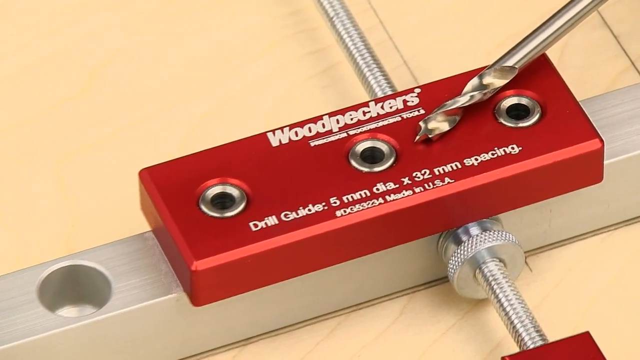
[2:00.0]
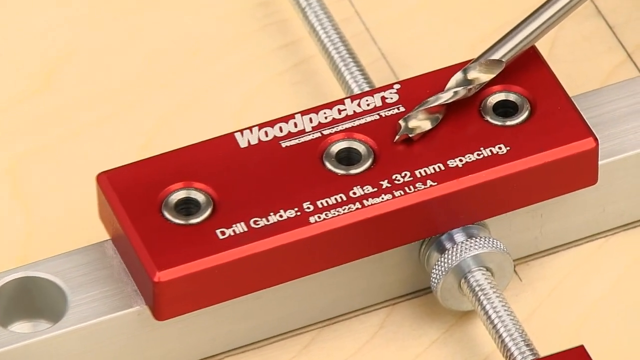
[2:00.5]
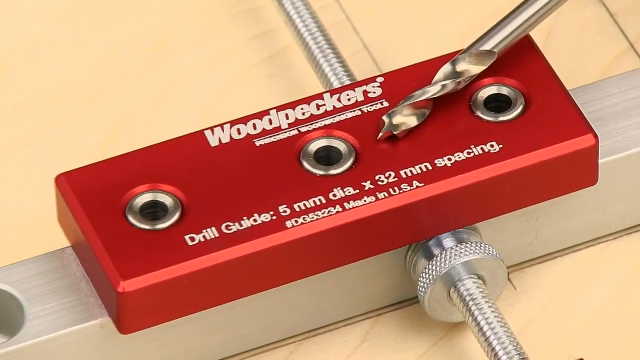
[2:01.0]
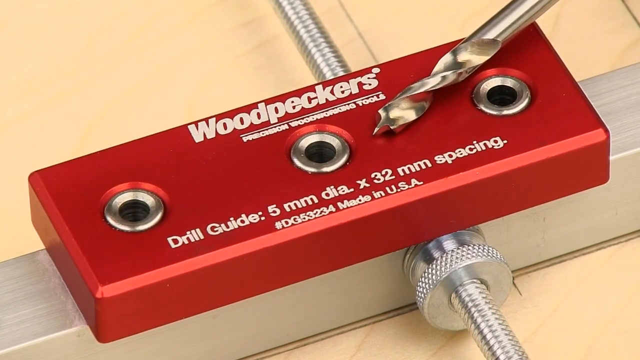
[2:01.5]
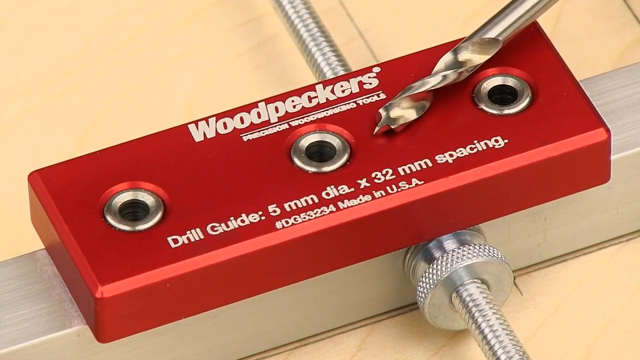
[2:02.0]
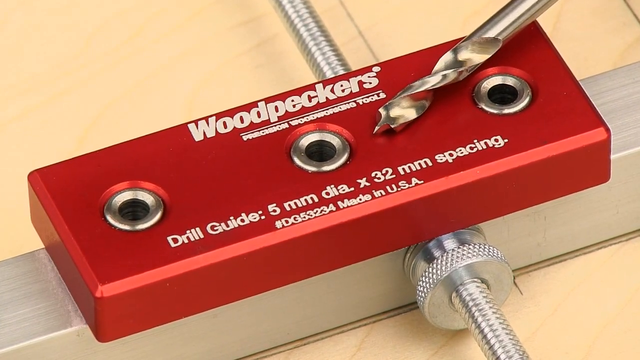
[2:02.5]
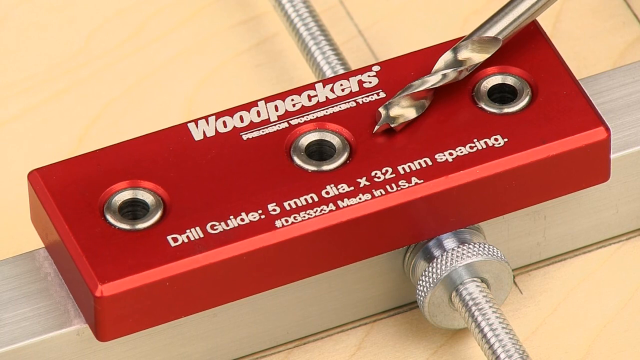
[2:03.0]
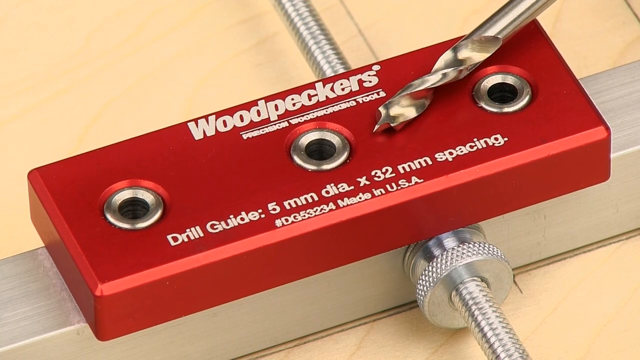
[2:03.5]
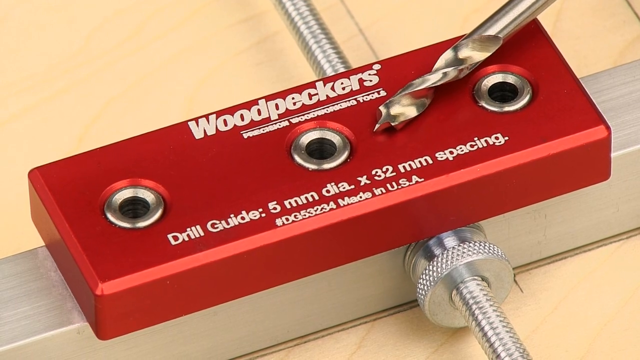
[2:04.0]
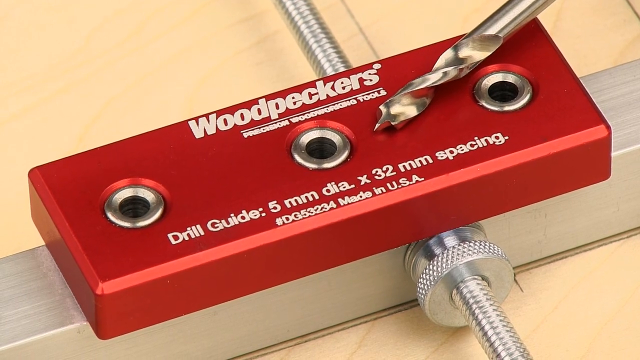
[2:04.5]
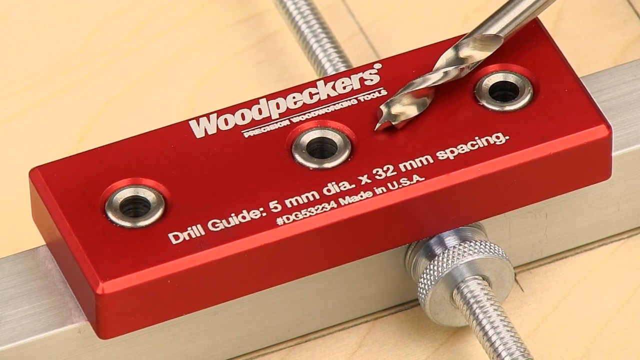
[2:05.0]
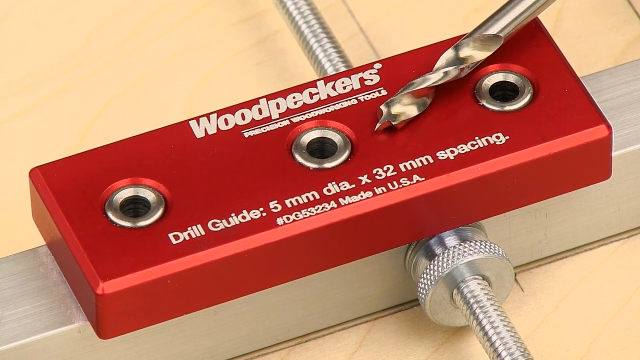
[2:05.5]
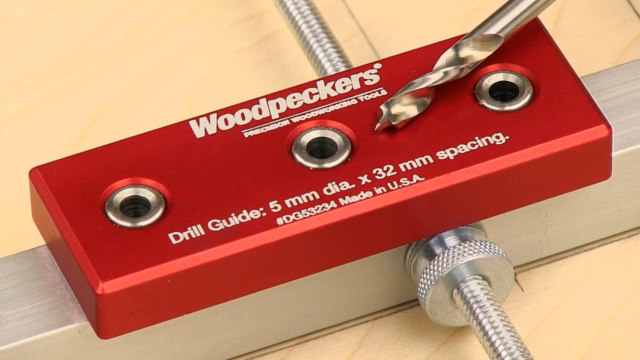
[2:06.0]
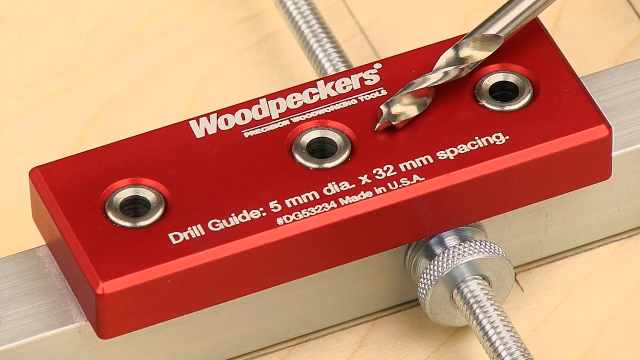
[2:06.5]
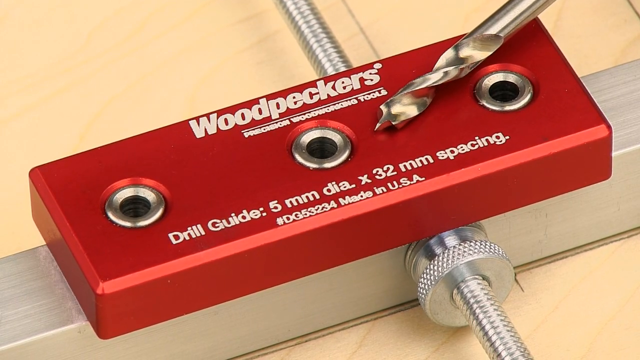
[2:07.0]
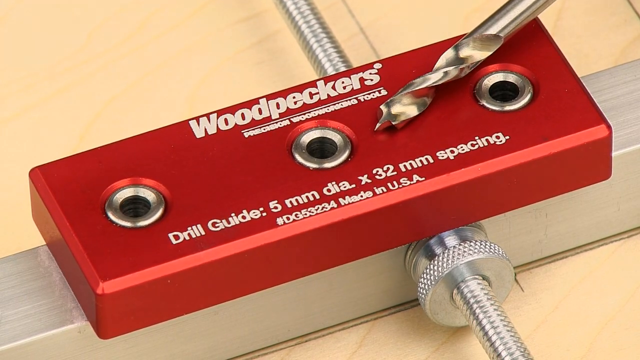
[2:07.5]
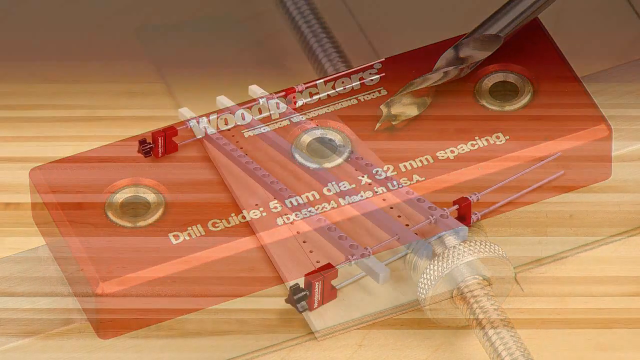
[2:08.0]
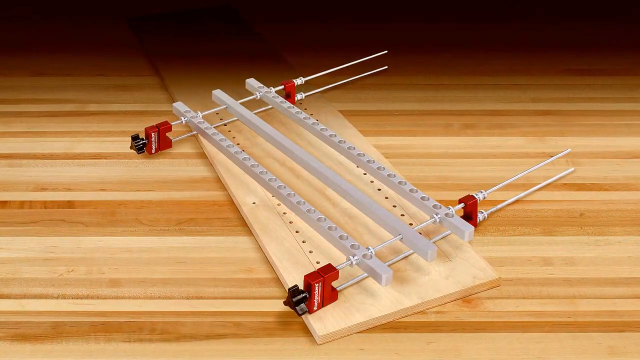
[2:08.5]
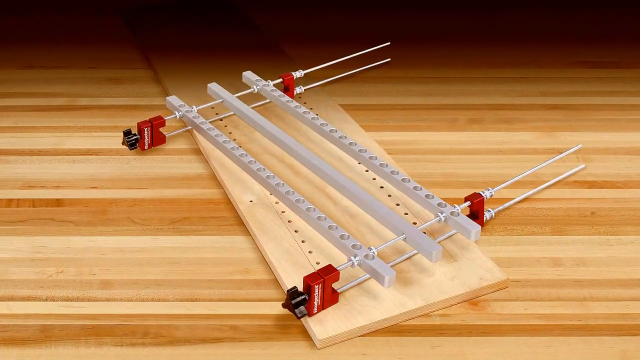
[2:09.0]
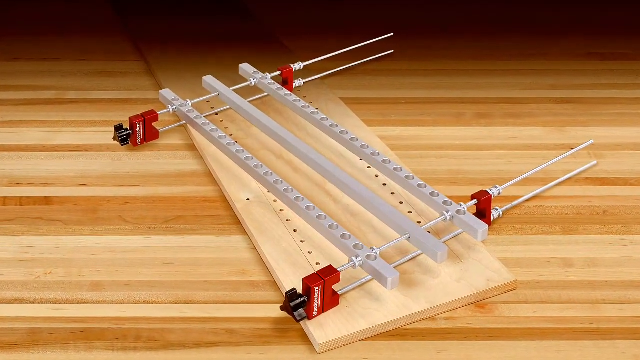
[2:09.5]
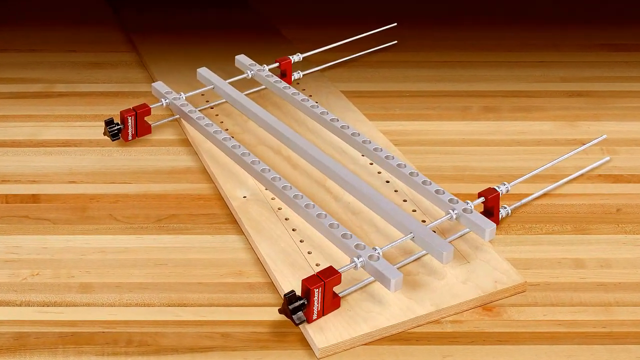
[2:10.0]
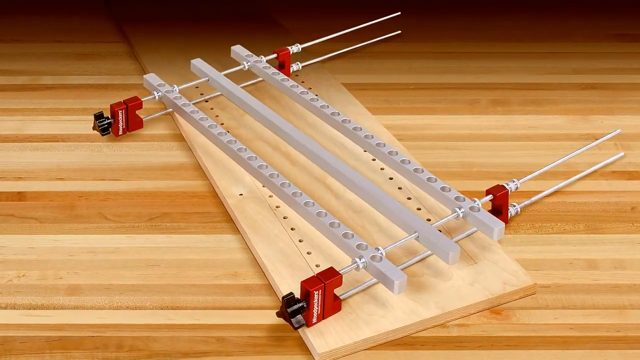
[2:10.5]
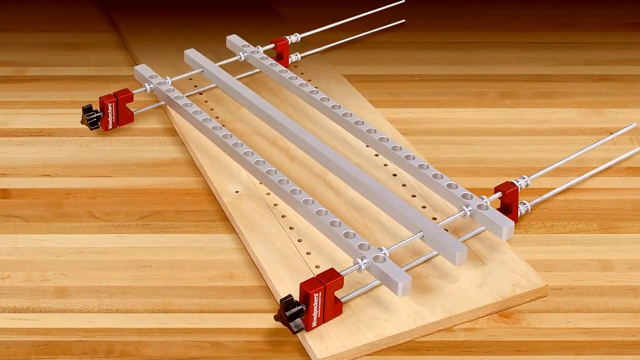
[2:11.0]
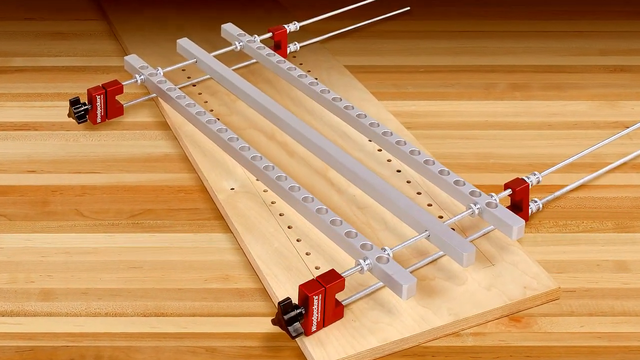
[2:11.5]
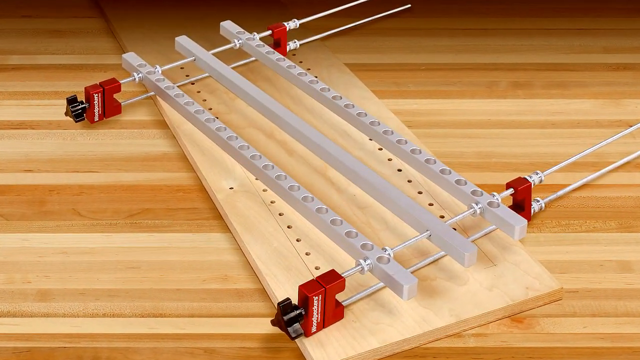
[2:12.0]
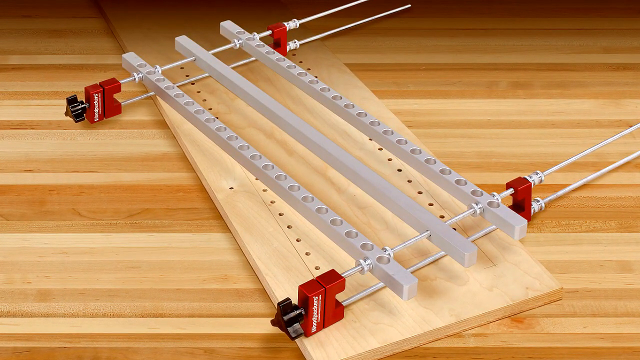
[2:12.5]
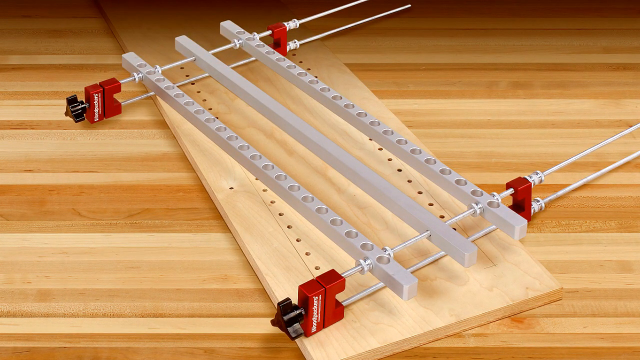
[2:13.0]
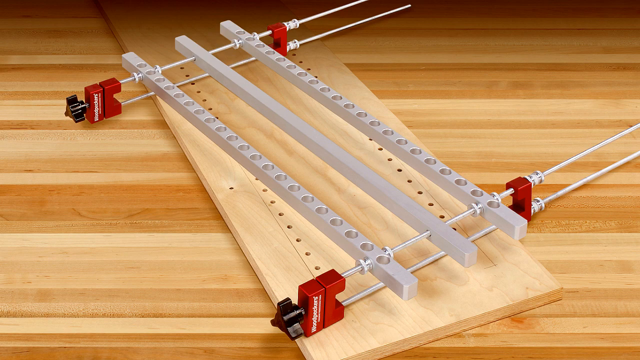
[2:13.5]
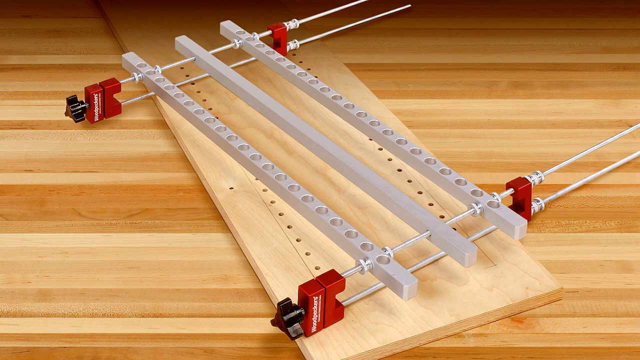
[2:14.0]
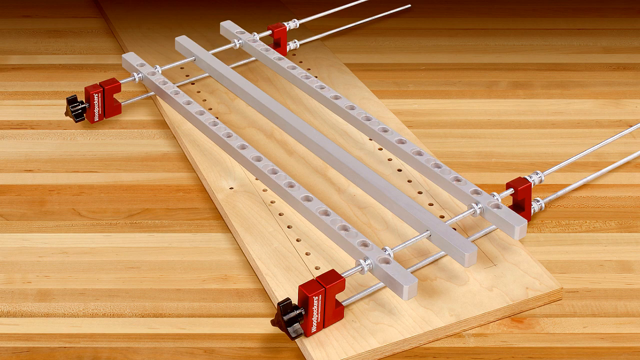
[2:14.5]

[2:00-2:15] The small drill guide, the little piece with three holes, is on top of the jig, and then the jig with the larger holes lies across the piece of plywood, which has holes drilled into it, set offset on a wood table surface. There is no real action. A close-up shows the smaller red guide on top of the larger silver jig. The jig is mostly silver with red metal portions on the edges that clip it to the wood, and black plastic handles to screw it together. A drill bit is on top of the drill guide. This sequence repeats.